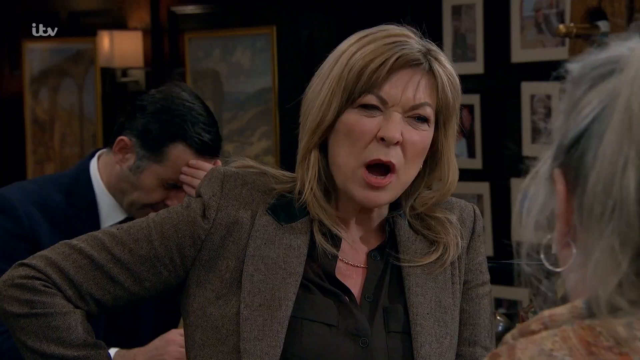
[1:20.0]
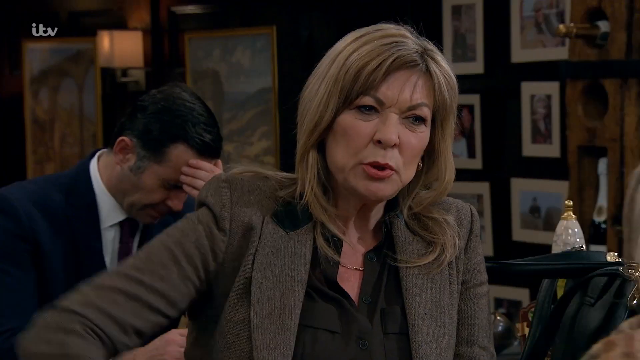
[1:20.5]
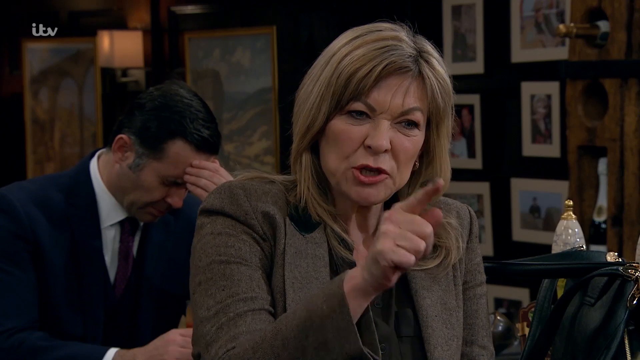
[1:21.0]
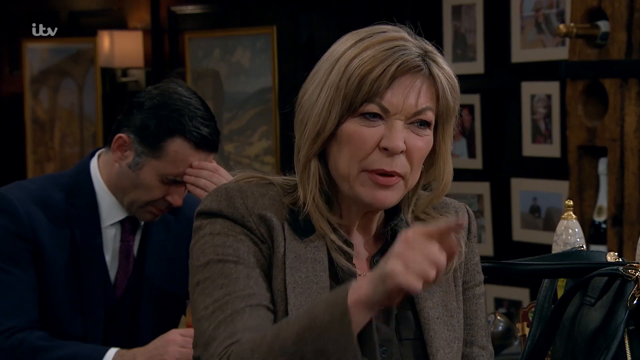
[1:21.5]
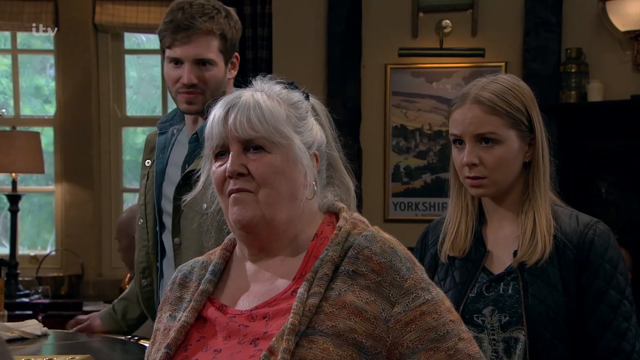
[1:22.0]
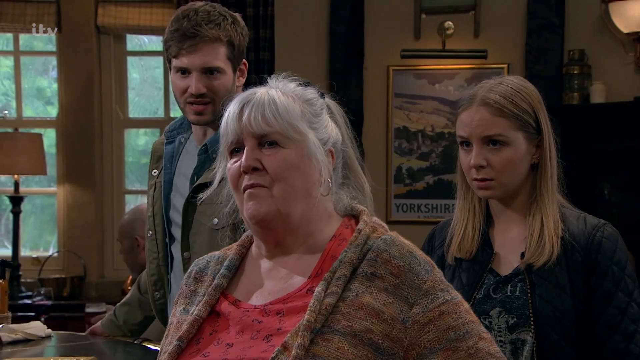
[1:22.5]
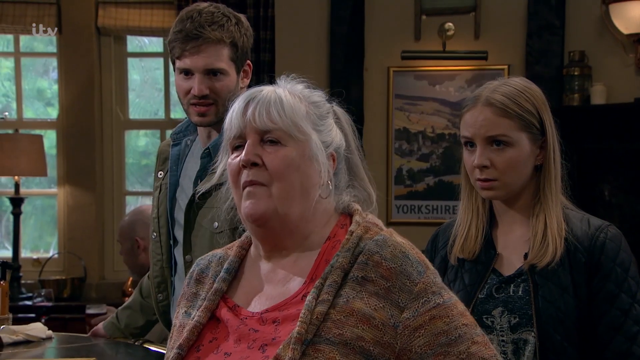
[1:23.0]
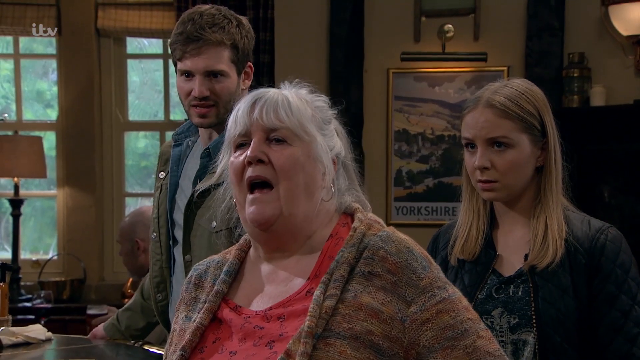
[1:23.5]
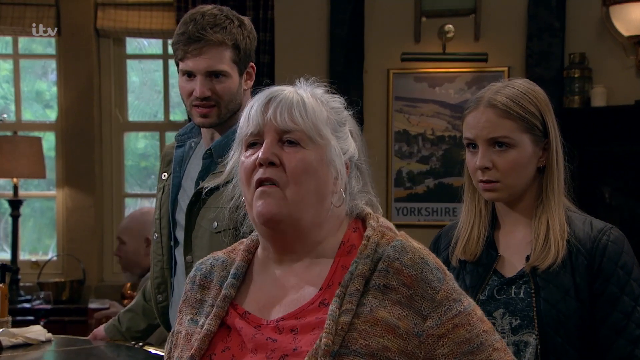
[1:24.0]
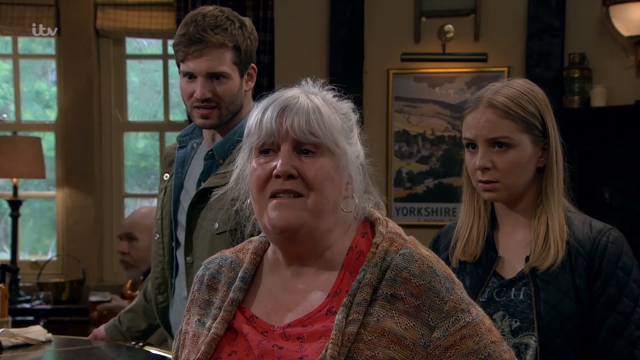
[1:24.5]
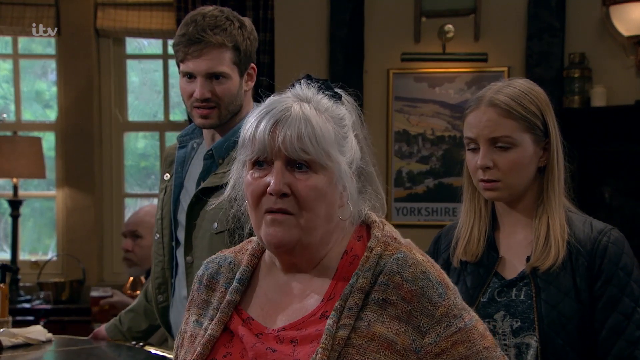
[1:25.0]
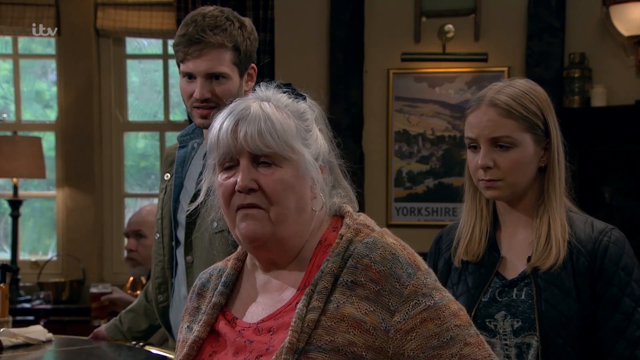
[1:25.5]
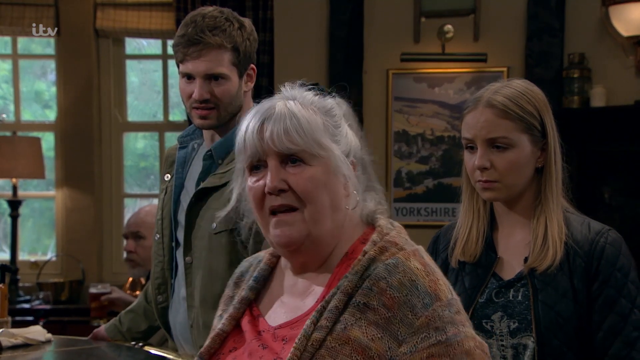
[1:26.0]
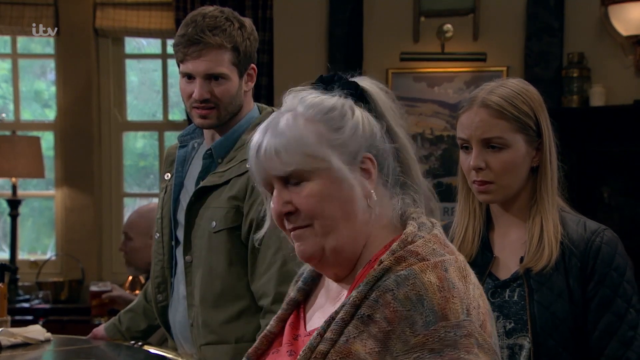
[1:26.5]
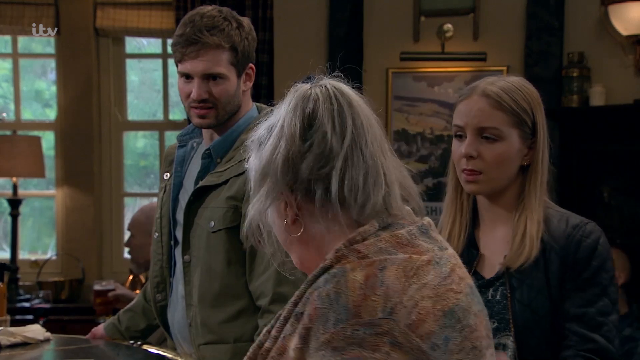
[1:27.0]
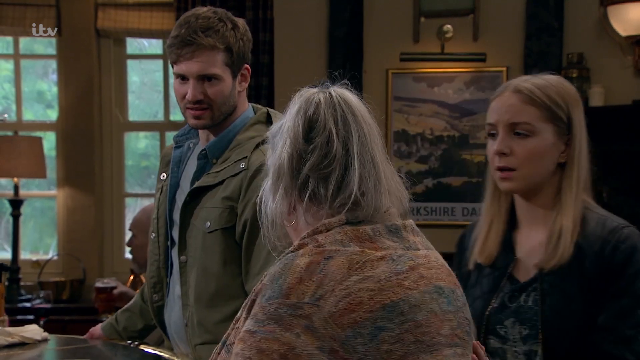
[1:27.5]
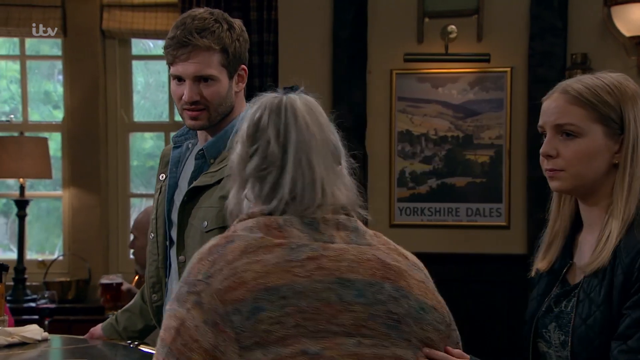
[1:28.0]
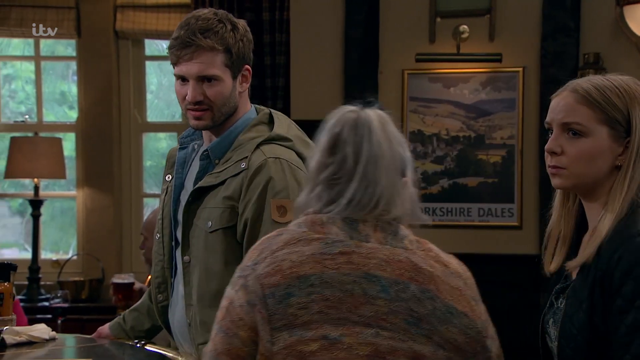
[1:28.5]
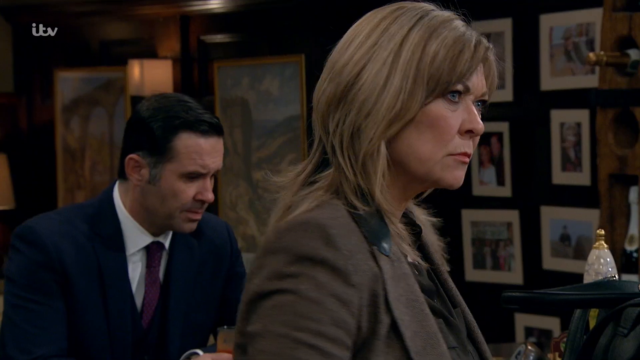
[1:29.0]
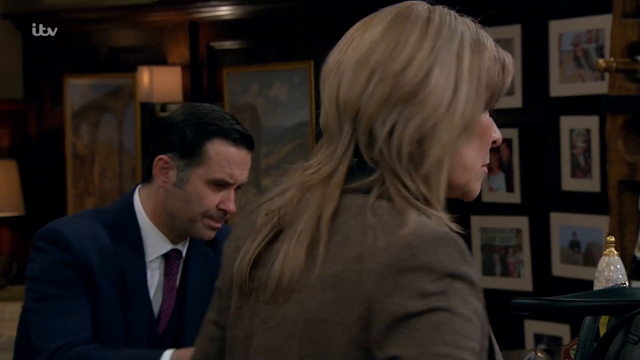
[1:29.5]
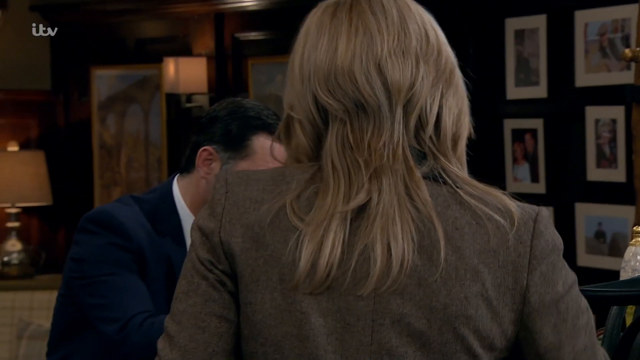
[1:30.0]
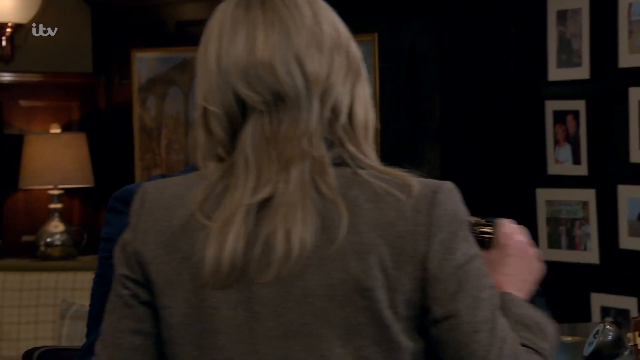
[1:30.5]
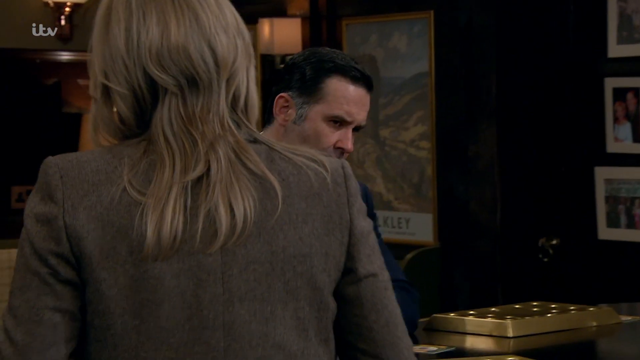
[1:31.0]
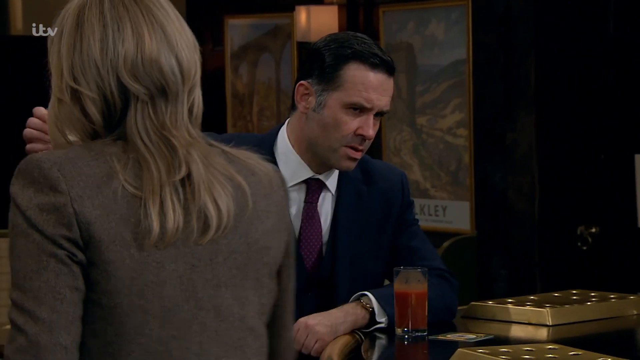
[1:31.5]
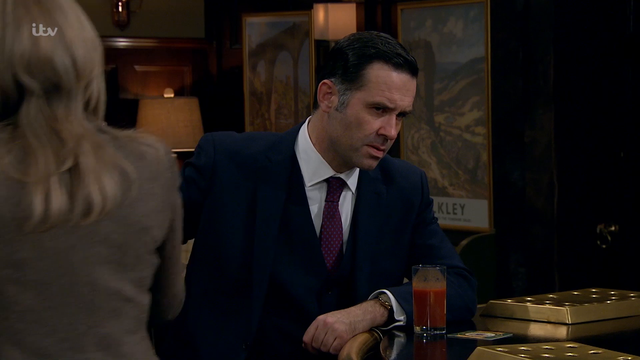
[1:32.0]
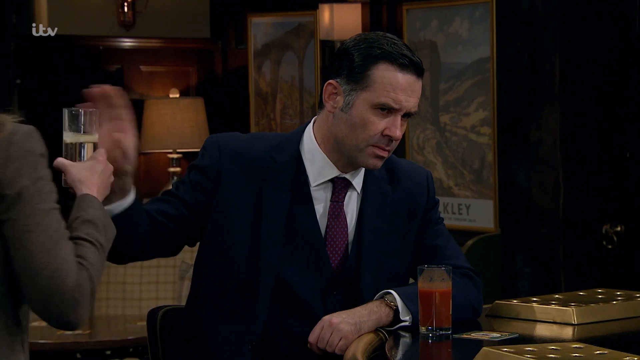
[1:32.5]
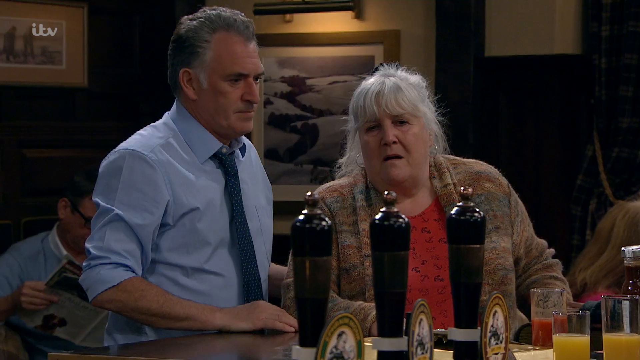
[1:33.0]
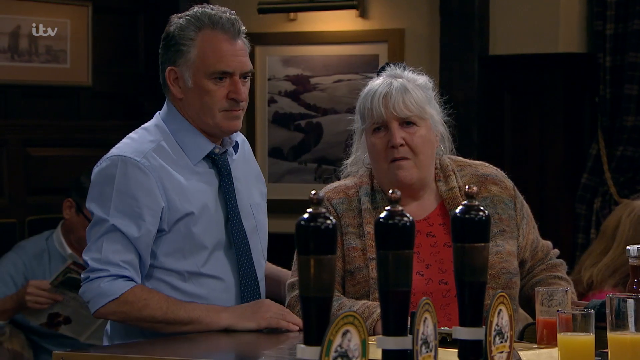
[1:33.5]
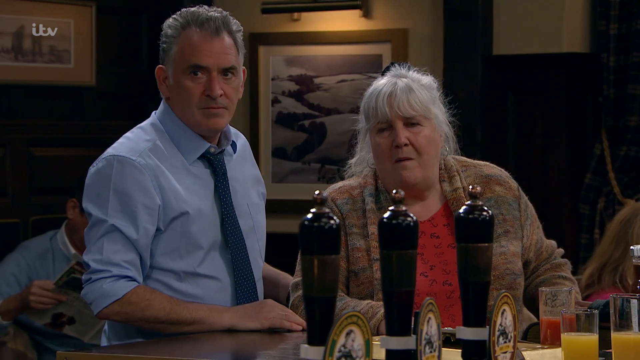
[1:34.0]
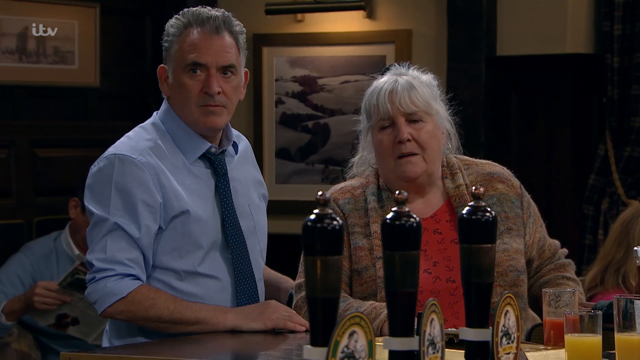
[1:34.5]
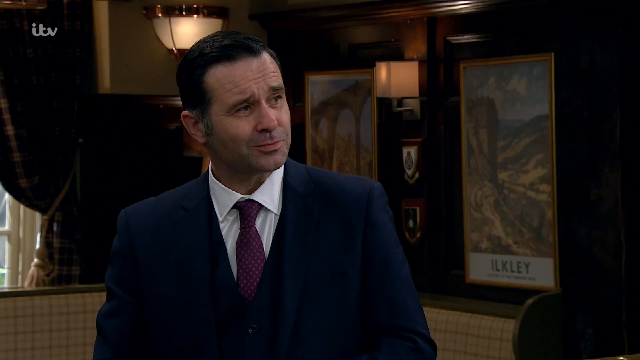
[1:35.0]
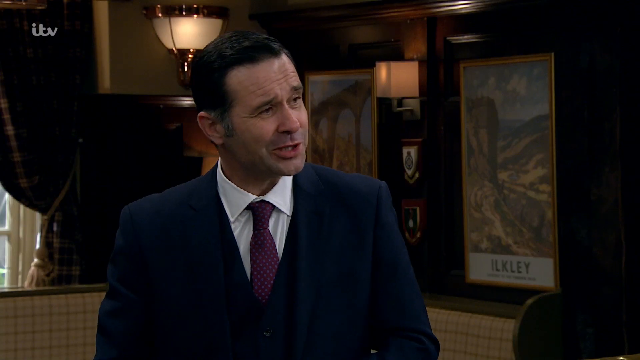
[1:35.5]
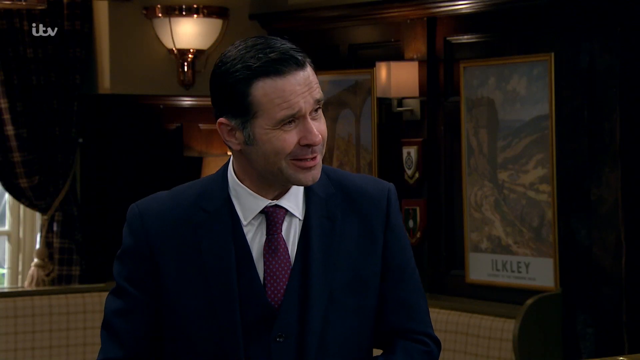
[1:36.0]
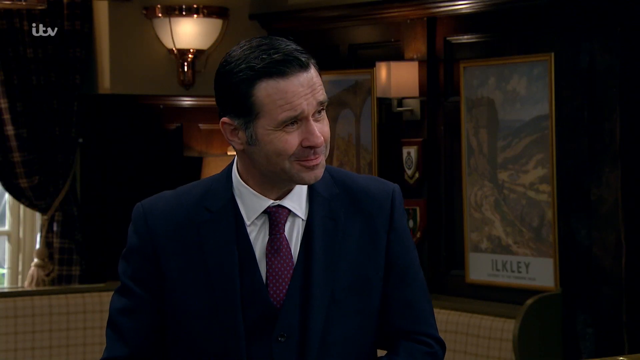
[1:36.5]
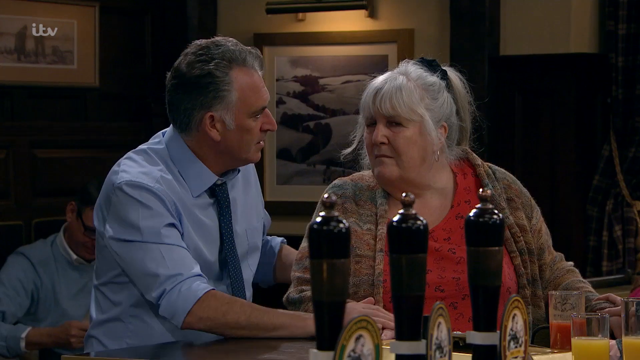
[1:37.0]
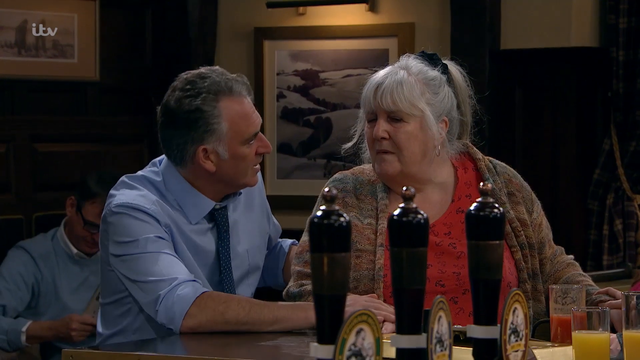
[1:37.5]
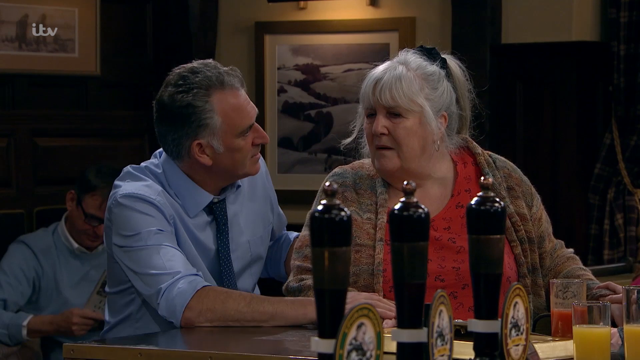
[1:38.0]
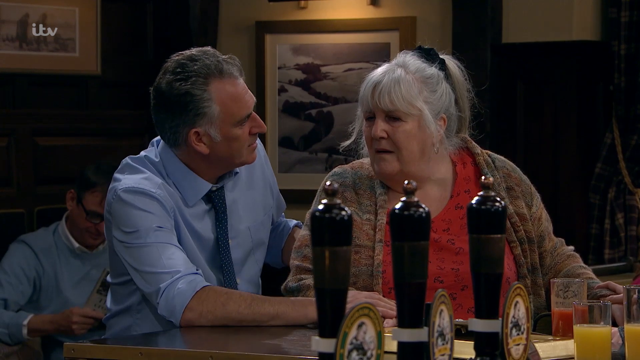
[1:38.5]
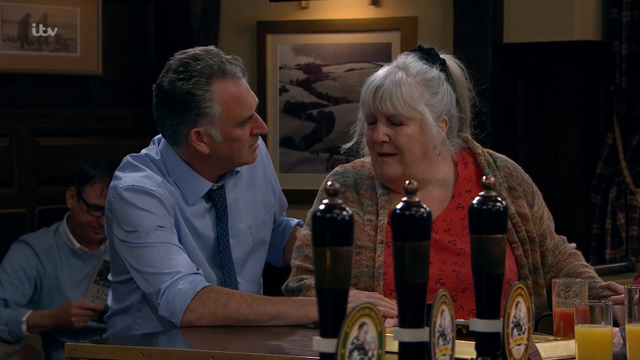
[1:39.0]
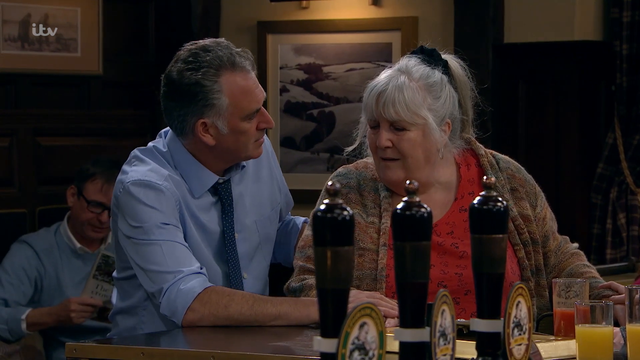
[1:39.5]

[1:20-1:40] The woman in her 50s angrily points at the older woman with gray hair, and then one of them turns around and starts to leave while the woman in her 50s goes in the opposite direction. The man in the blue suit hands the woman in her 50s a glass of what appears to be champagne or maybe beer, and then he starts to speak. The barkeep sits down next to the older woman, and there might be someone in the background behind them. The bald man in the very back who was eating now has a glass of beer in his hands. The scene is still inside the bar, and there might be a patron or two behind the barkeep.